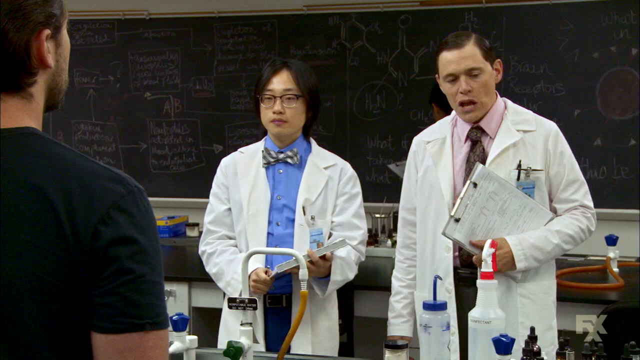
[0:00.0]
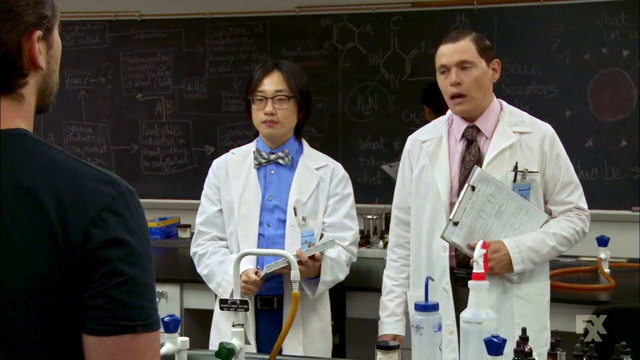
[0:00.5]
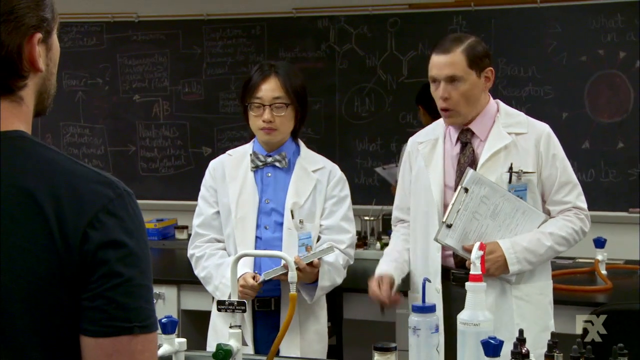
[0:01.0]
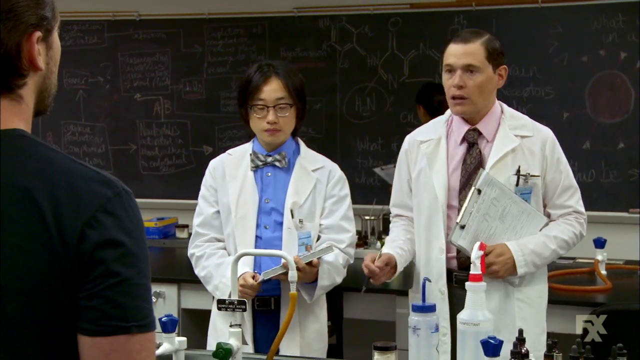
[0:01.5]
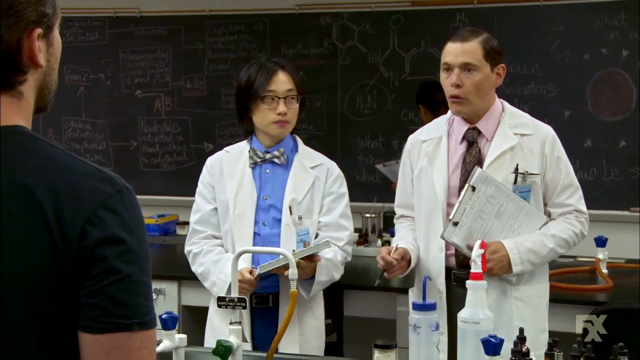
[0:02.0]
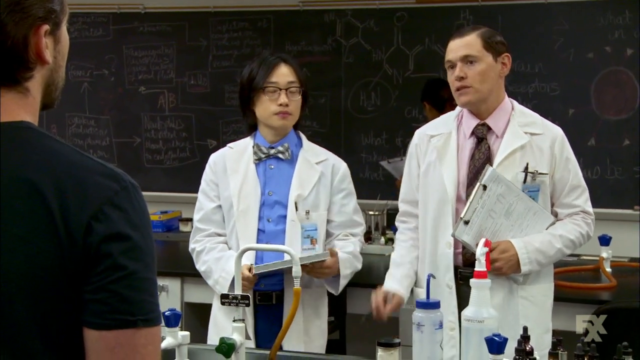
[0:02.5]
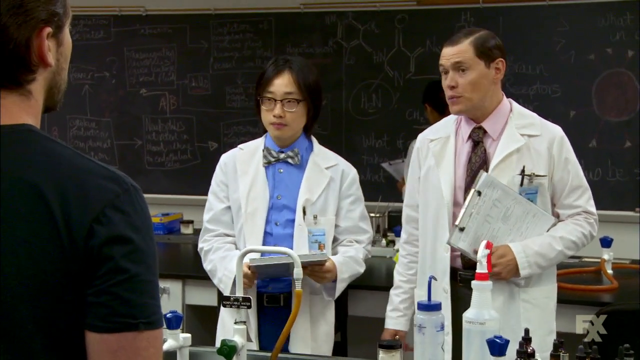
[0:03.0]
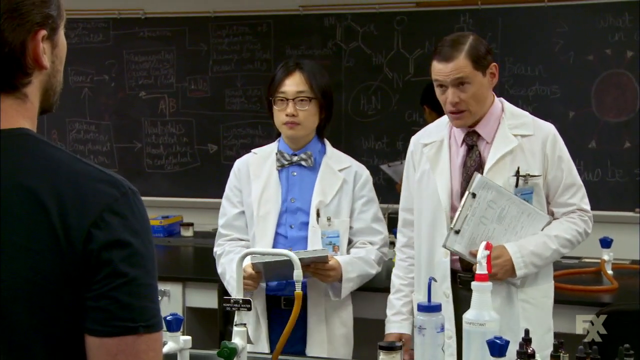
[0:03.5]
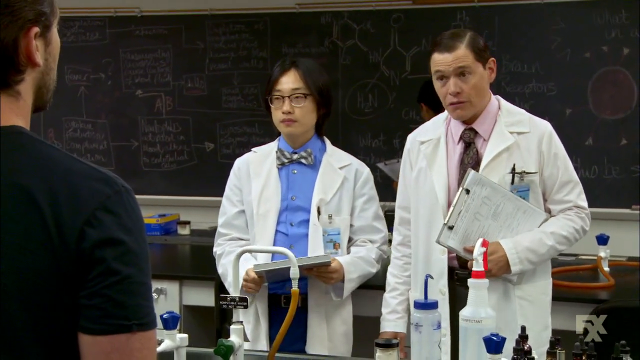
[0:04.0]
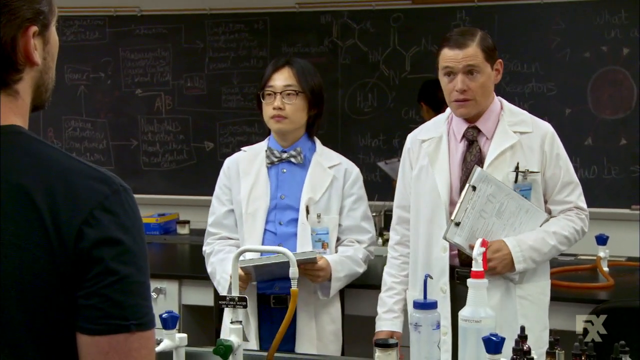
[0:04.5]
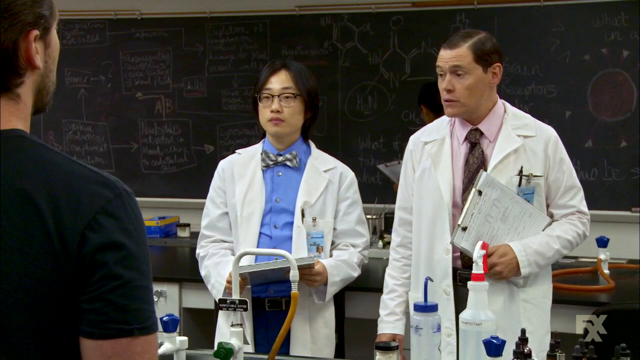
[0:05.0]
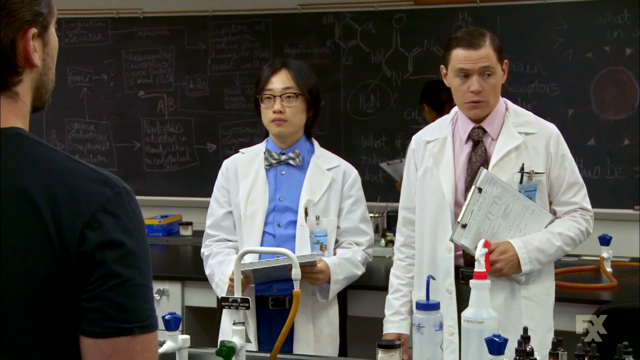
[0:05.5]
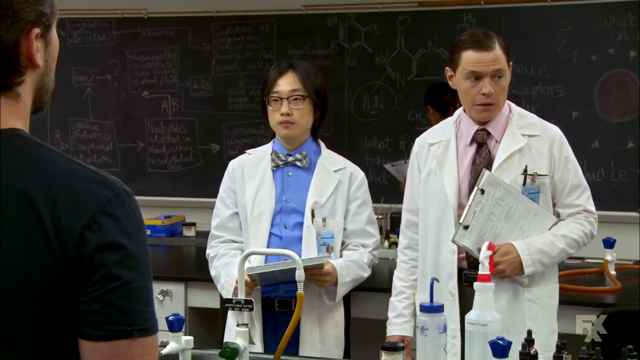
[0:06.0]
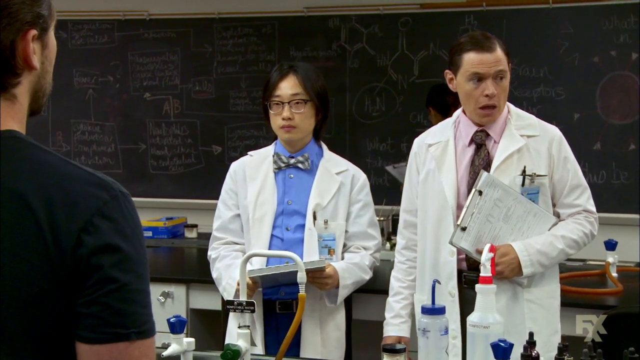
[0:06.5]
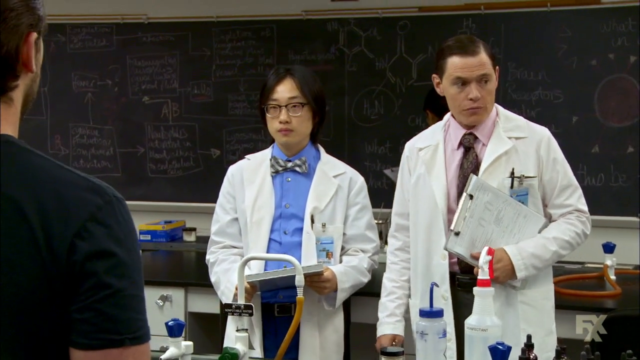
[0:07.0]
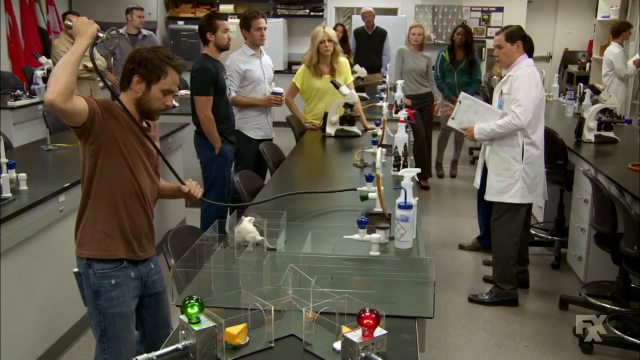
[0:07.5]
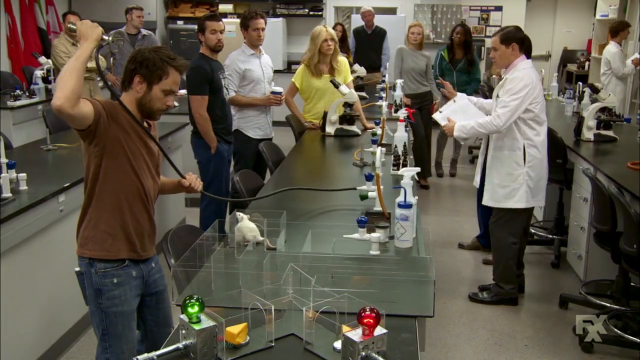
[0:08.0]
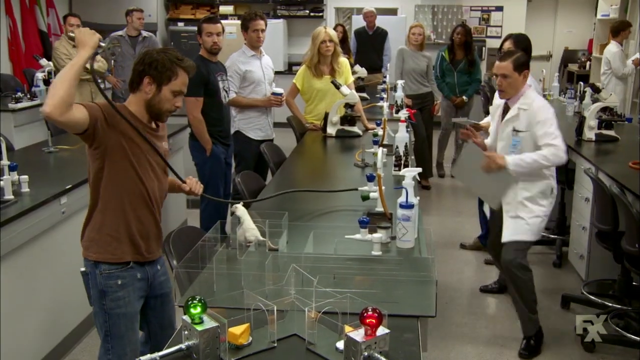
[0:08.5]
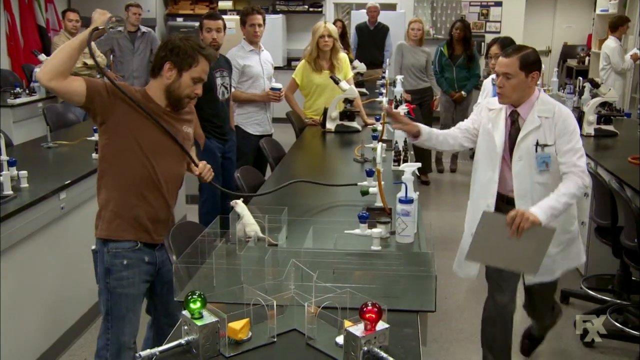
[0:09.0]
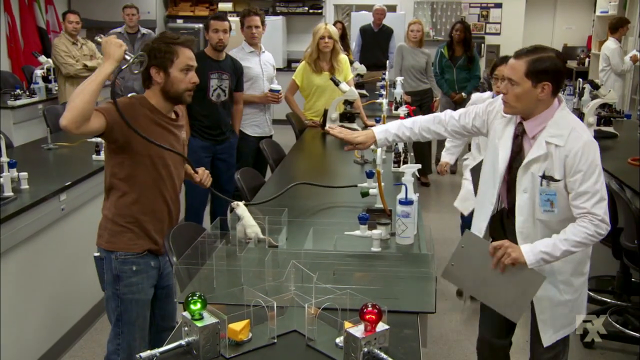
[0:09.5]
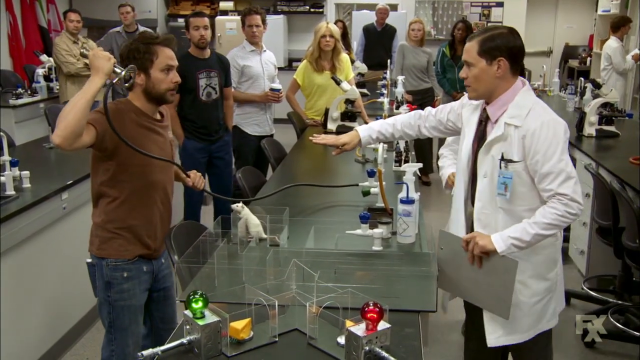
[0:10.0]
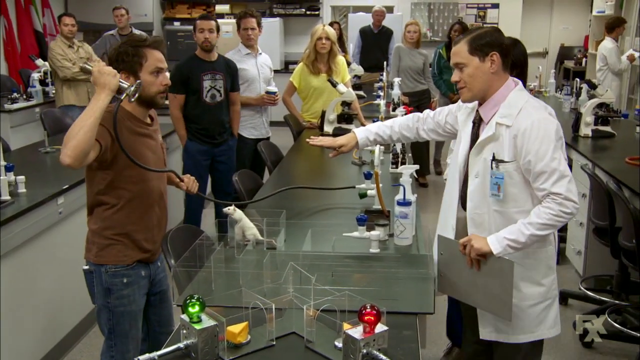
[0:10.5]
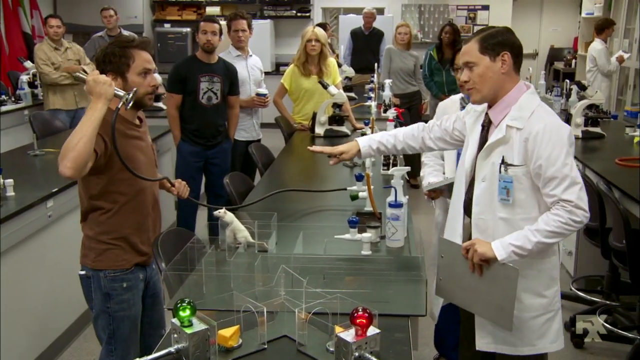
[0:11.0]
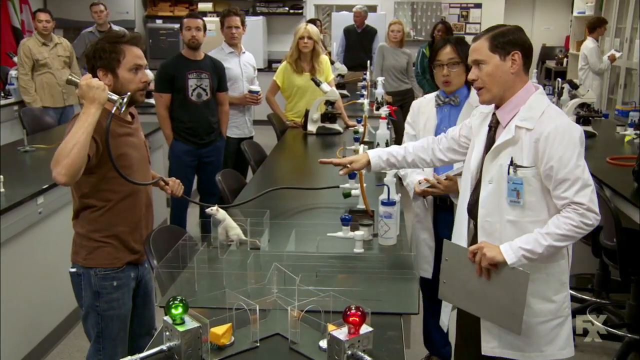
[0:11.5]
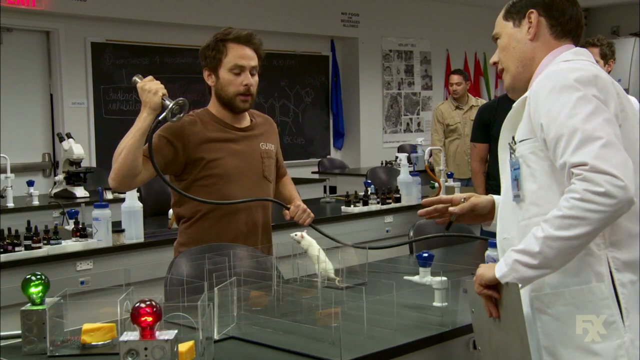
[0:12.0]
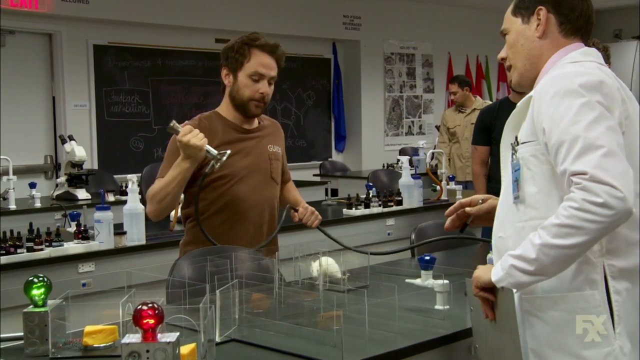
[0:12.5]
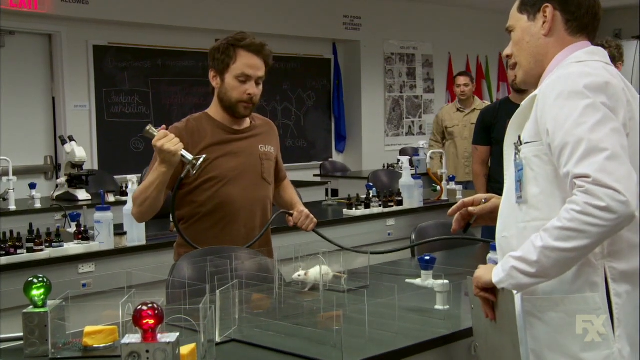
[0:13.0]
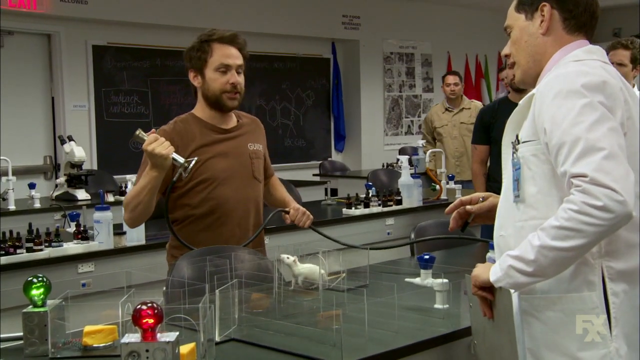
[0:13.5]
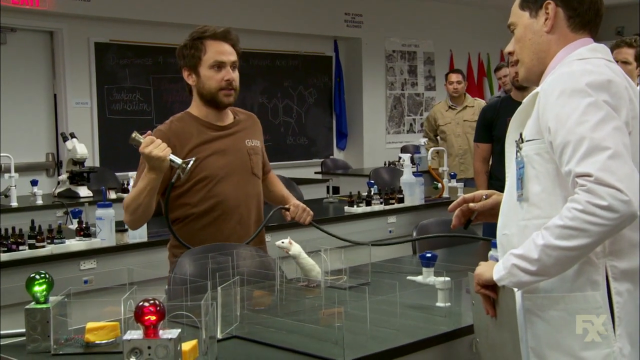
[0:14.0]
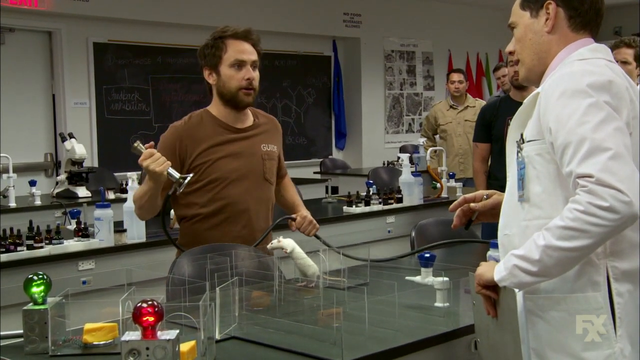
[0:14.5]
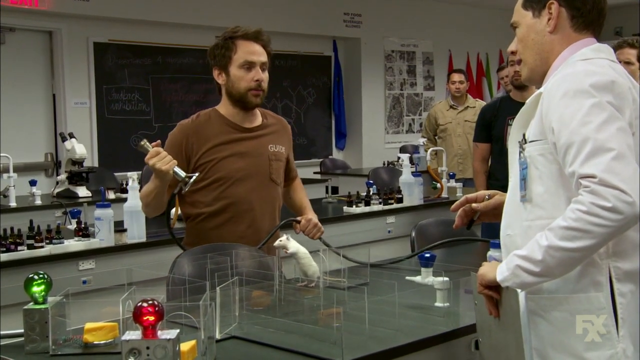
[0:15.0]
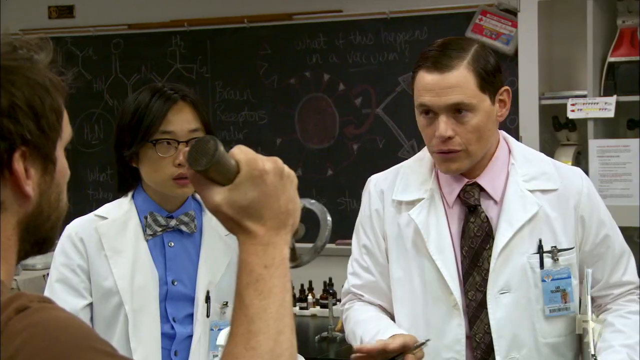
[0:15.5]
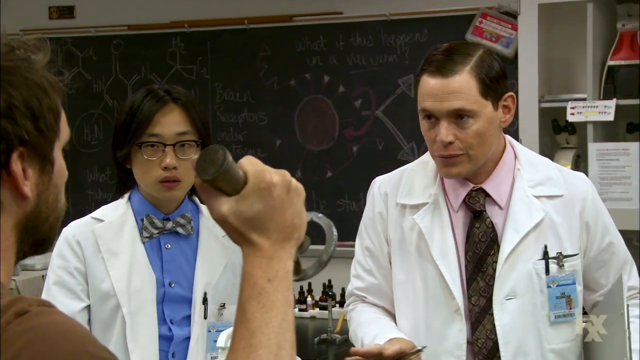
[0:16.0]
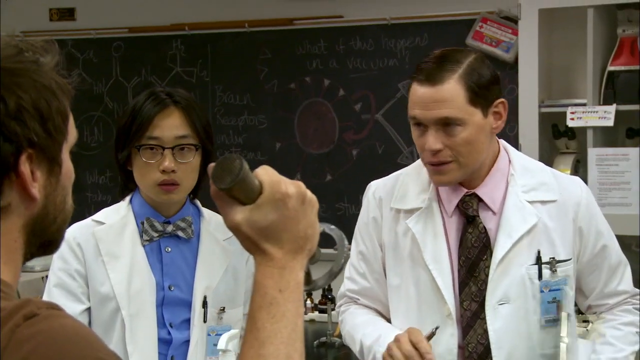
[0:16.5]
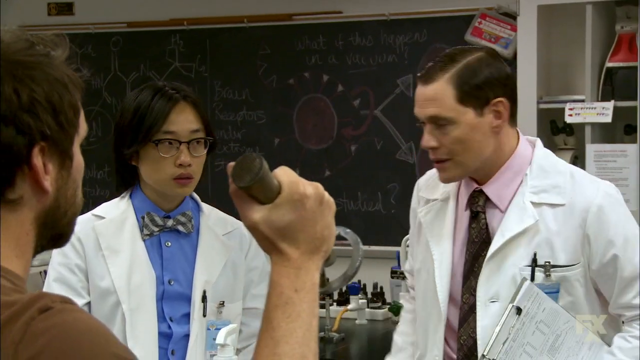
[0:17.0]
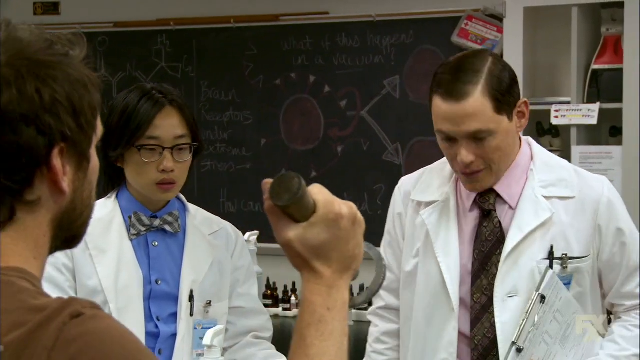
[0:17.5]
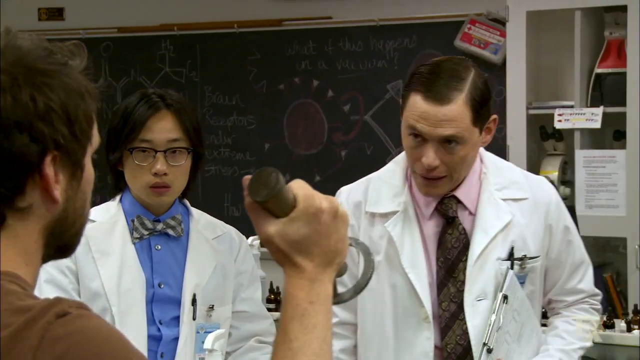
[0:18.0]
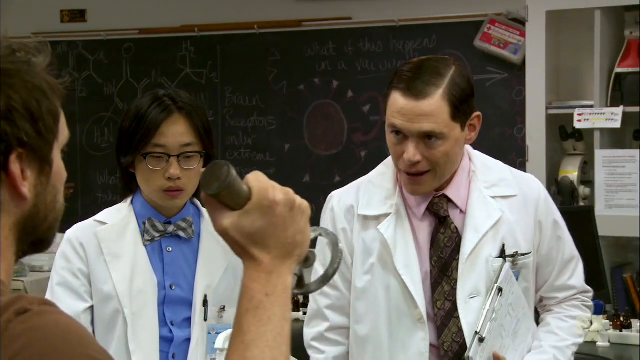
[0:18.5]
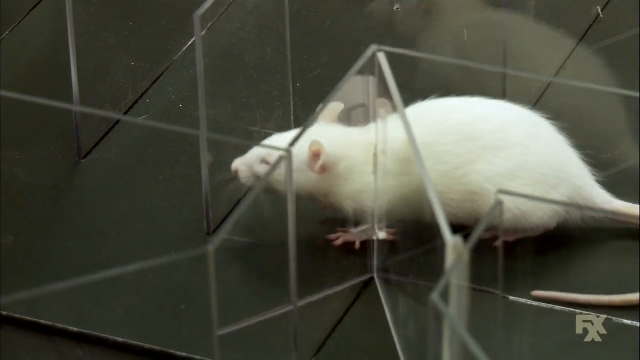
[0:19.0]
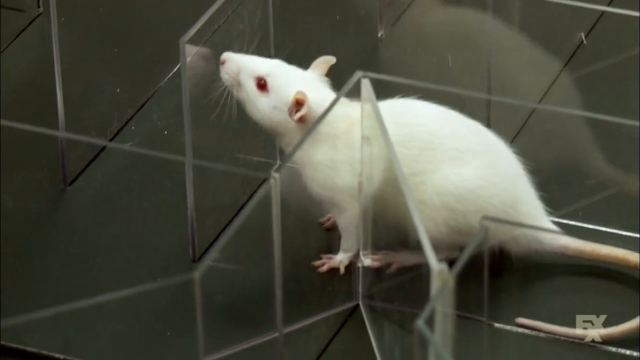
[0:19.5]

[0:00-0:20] Two scientists in white lab coats talk to a young man. The one on the left wears a bow tie and glasses. The one on the right has short hair combed over from the side, a brown tie and a pink shirt, and holds a clipboard in his left hand, tucked against his body. He looks like he is scolding or questioning the young man, whose face is visible only at a slight angle. The man on the right kind of lowers his head, his eyebrows raised as he talks, and looks around the room. The room looks like a science classroom, judging by the things on the chalkboard, the men's dress and the equipment. The view then shifts to a shot from the side of the room: a lot of adults are standing around, a young man has a hose connected to a valve, and a little white rat is on the counter. The man with the clipboard rushes over to the man with the hose and puts out his right hand to tell him to stop. The man with the hose looks up, makes a jerking motion with the device in his right hand toward the white mouse, and starts talking. The man in the lab coat comments back and looks down, and the shot cuts to the little white mouse.